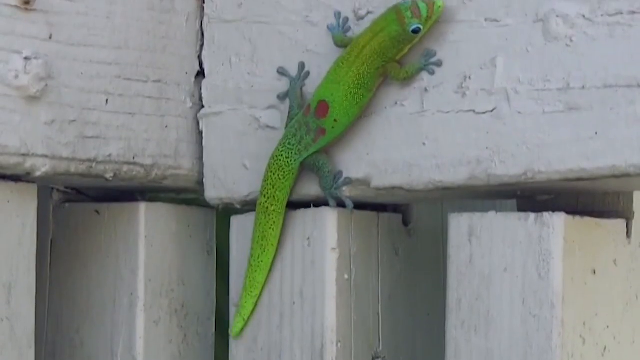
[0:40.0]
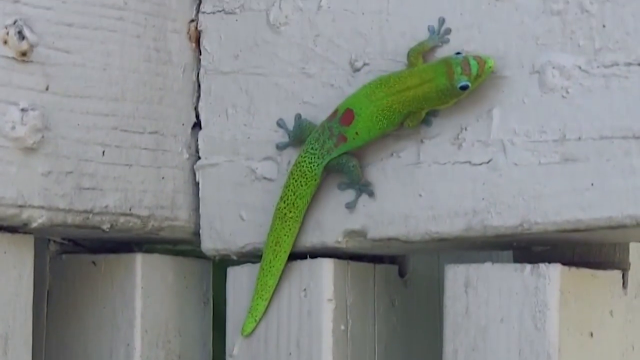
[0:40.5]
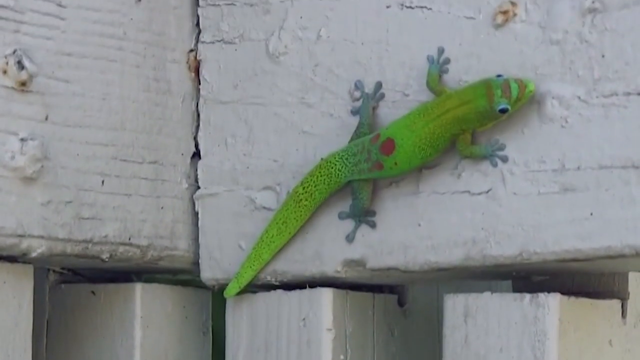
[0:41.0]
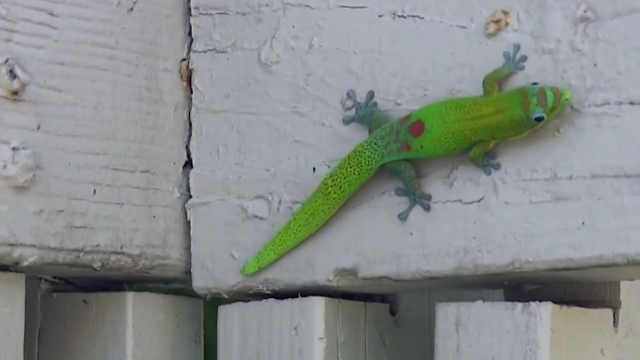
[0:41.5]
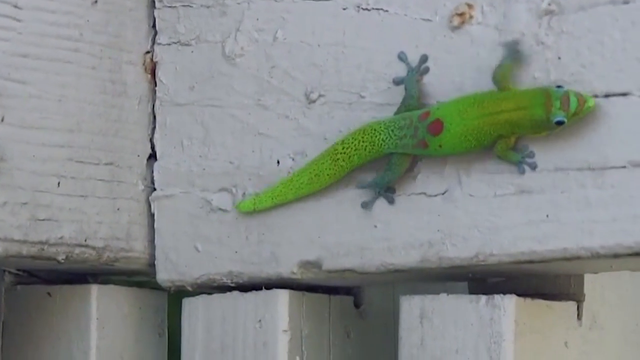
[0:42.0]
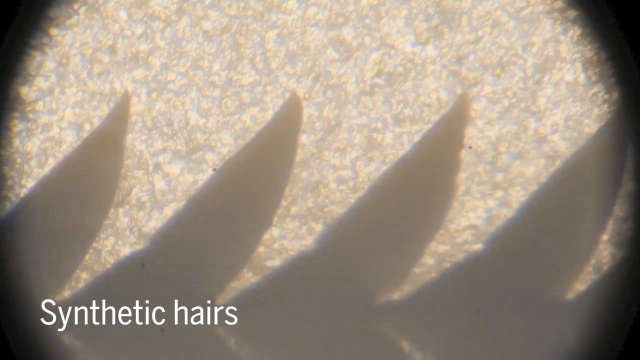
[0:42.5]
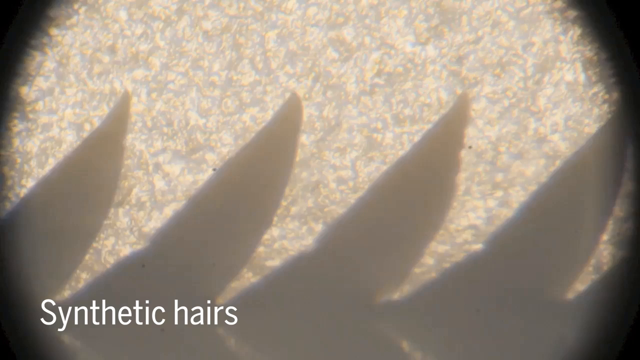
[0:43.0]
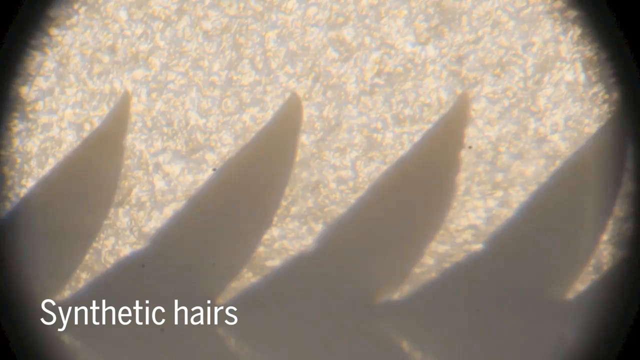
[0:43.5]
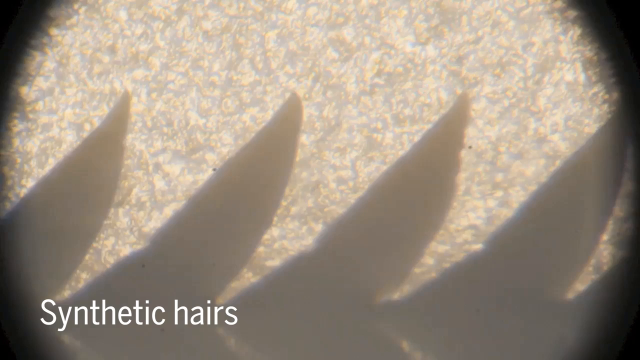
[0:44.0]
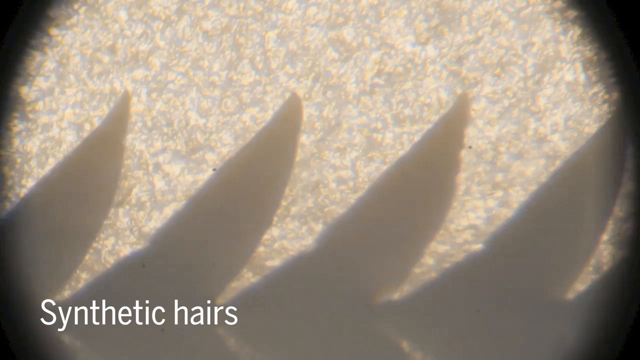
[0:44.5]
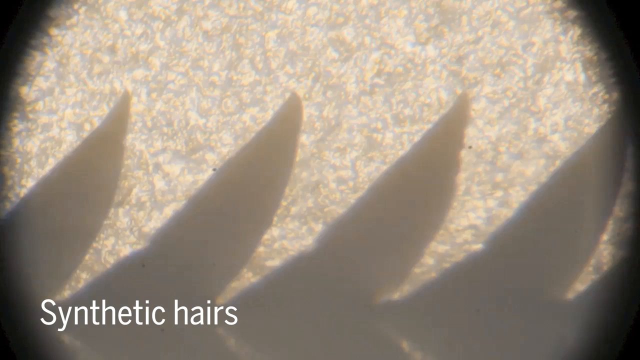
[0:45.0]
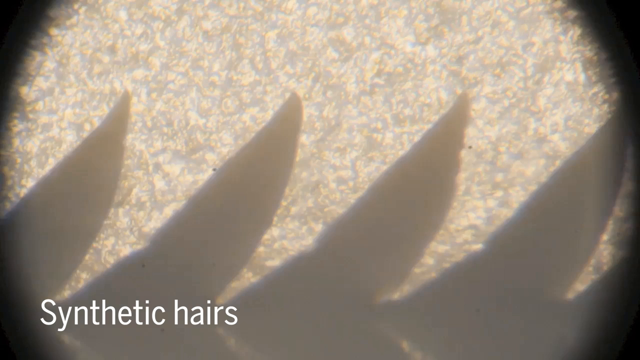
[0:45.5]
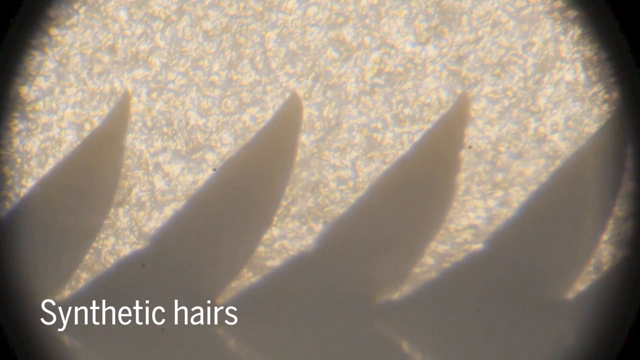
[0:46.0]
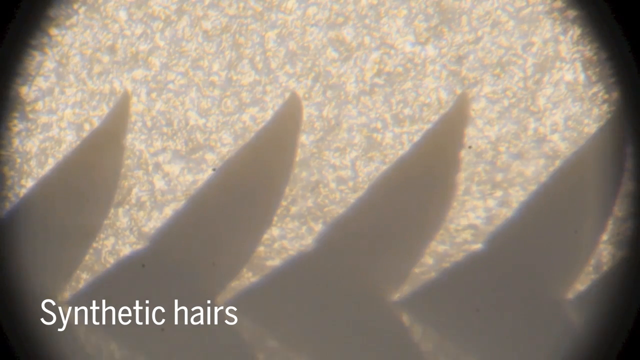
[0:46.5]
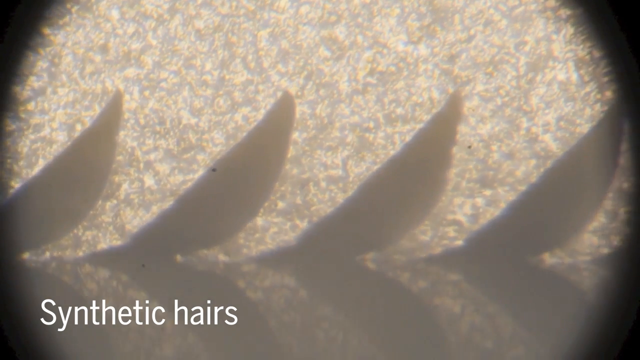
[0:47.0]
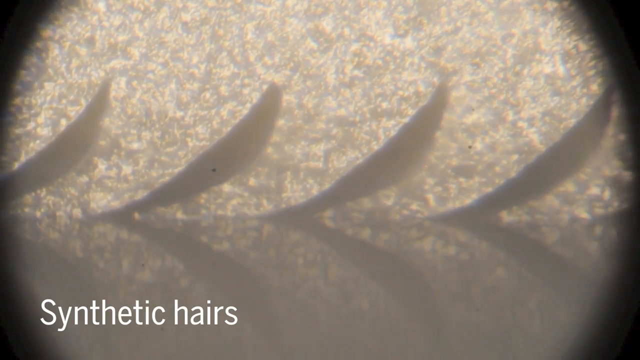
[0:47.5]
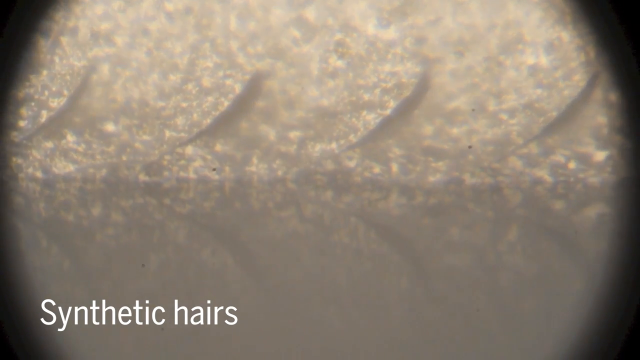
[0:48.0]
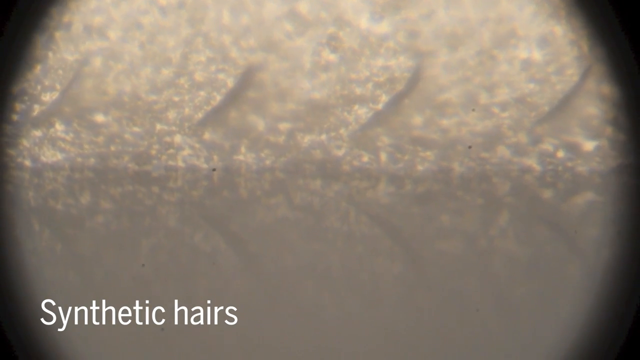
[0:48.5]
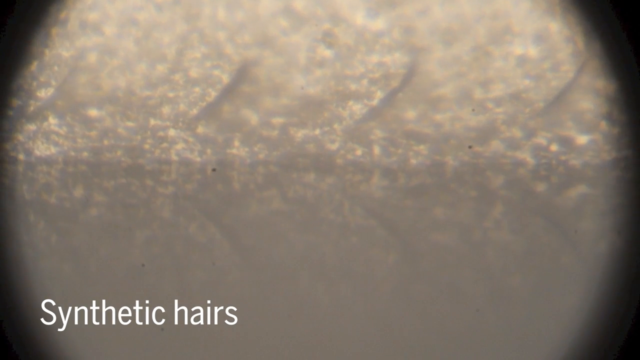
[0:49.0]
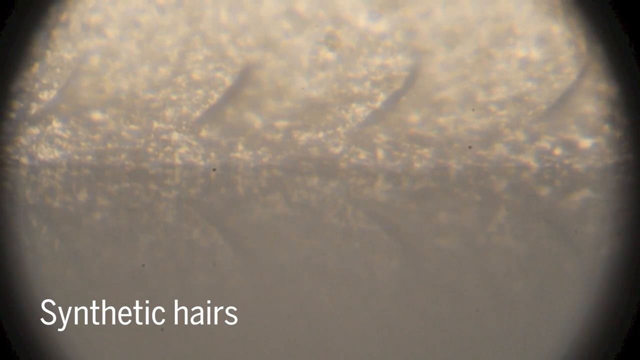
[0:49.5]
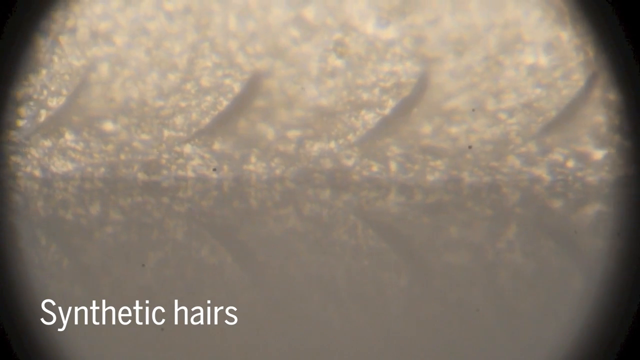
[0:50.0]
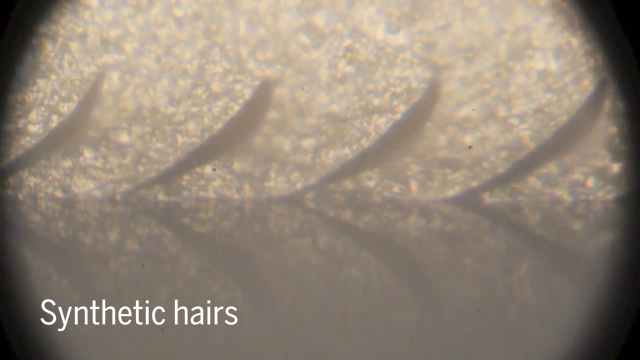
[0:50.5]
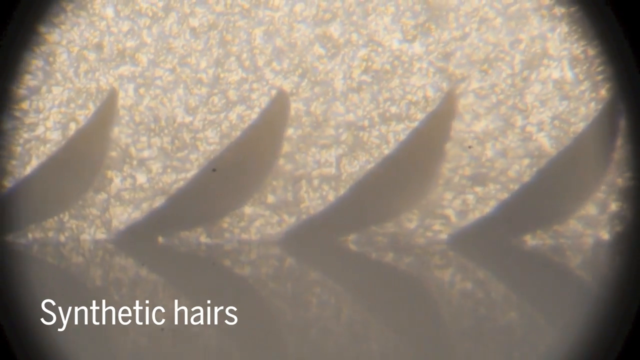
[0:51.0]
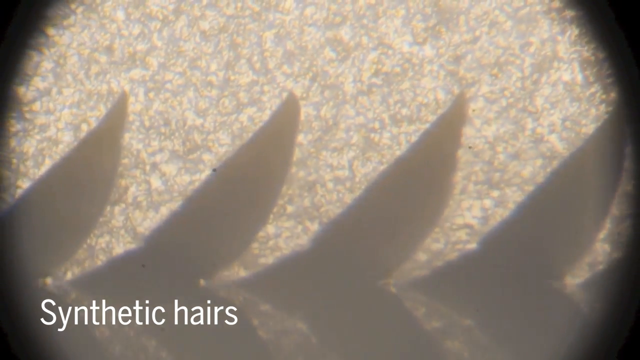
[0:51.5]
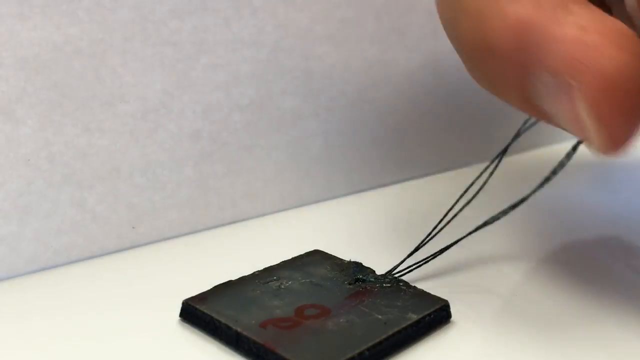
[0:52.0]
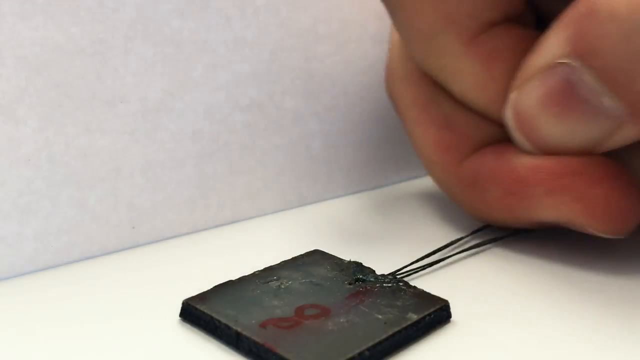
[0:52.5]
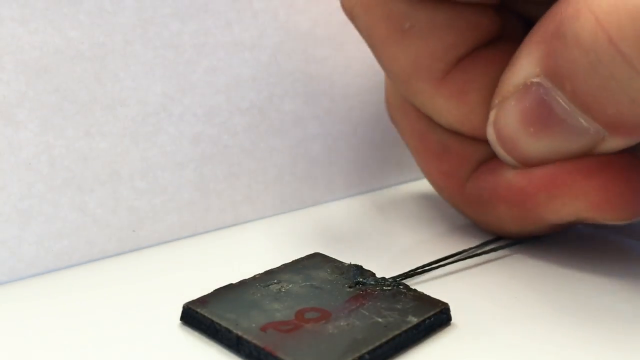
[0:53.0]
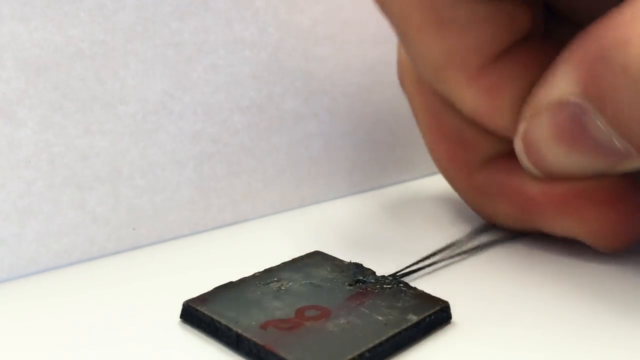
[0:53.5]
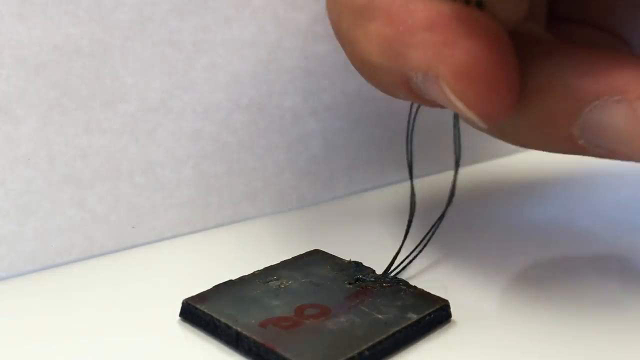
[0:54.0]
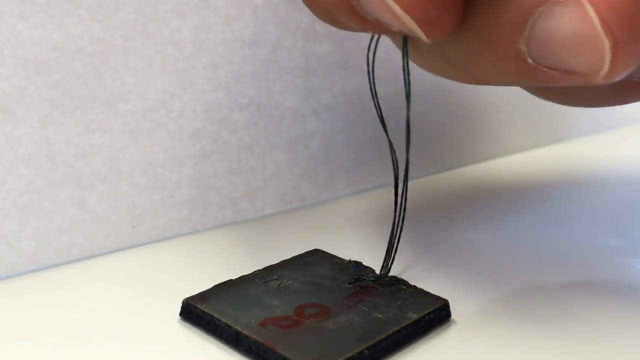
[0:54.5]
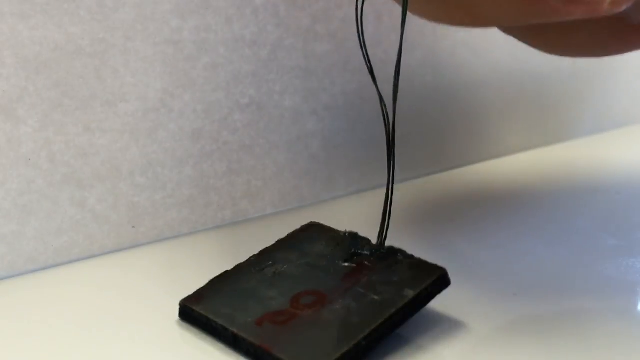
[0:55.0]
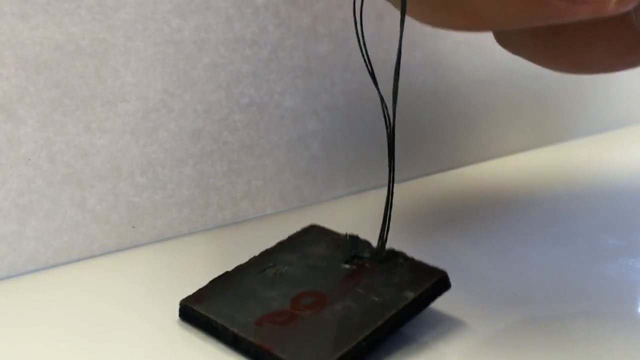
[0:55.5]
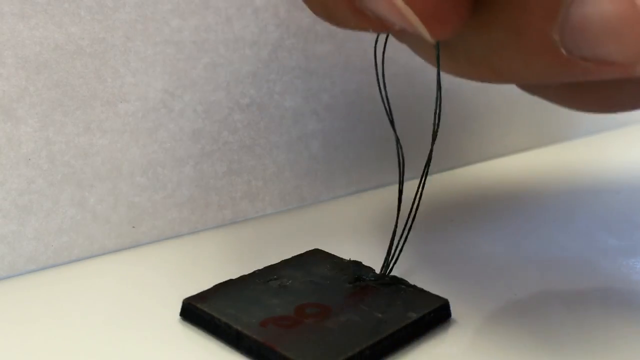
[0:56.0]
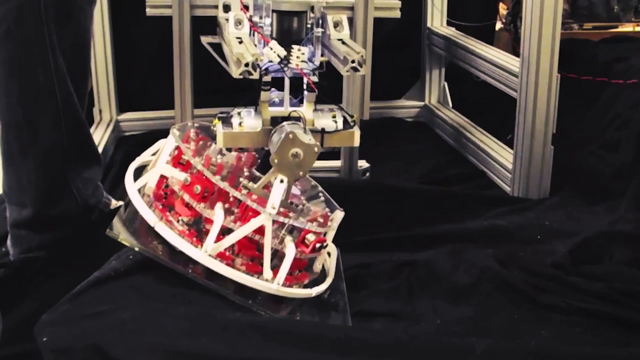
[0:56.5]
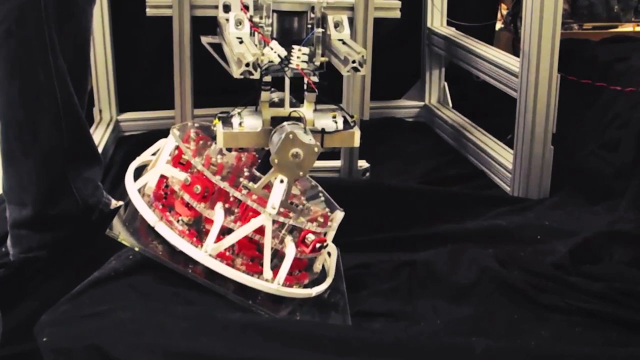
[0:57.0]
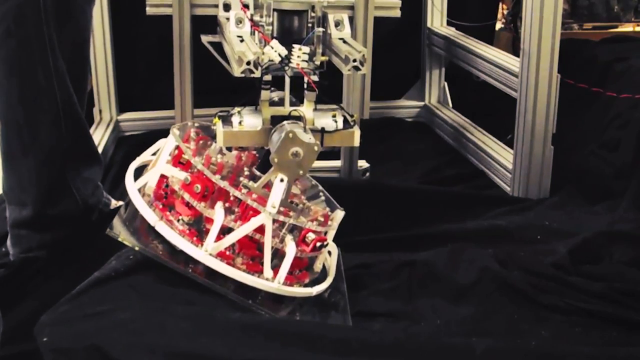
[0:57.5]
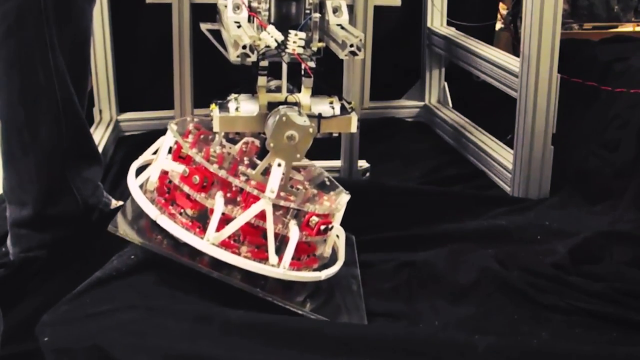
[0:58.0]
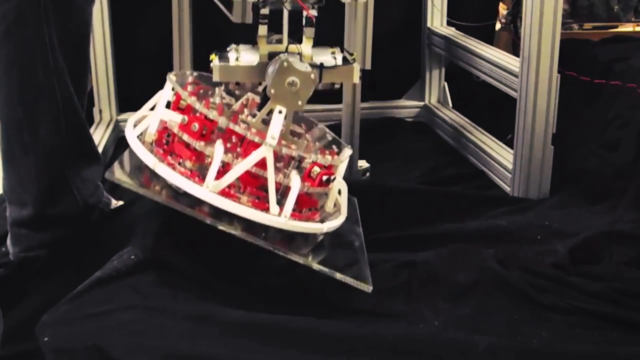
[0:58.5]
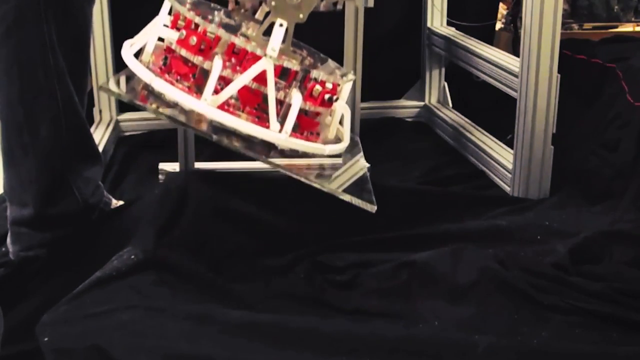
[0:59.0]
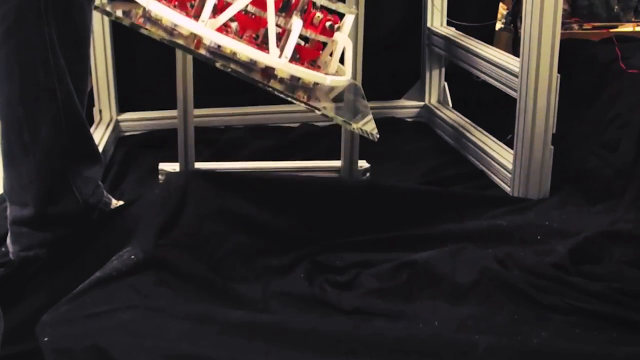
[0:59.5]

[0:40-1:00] An up-close shot shows a green lizard crawling up a wooden structure that has been painted white. The lizard is bright green, its legs are a bit darker green, and there are three red spots on its back. It crawls up and sticks to the side of the wood, hanging on without falling. In the bottom left-hand corner of the screen, "synthetic hairs" is written in white. The video then cuts to a robot arm with a red suction cup on its tip, which comes down, presses on a pane of glass and picks it up. The pane of glass is sitting on a black piece of material that kind of looks like felt. Around the robot arm is a small square made up of metal braces so it doesn't fall over.